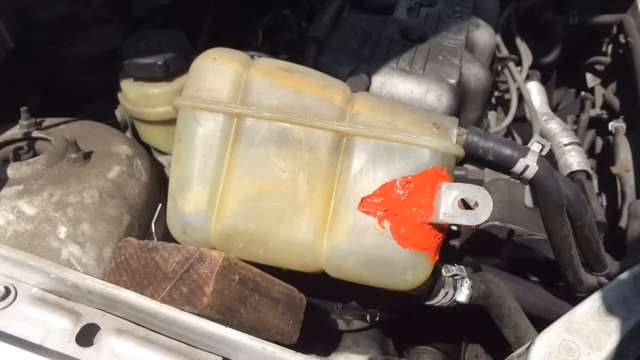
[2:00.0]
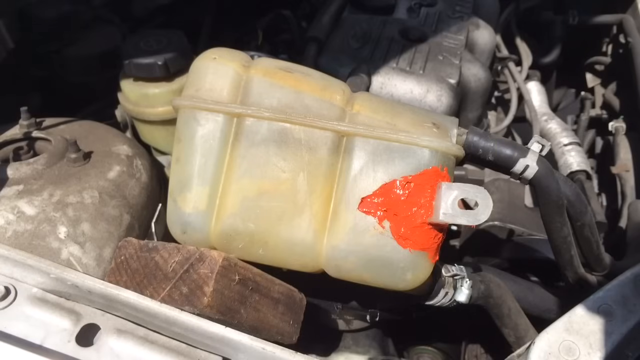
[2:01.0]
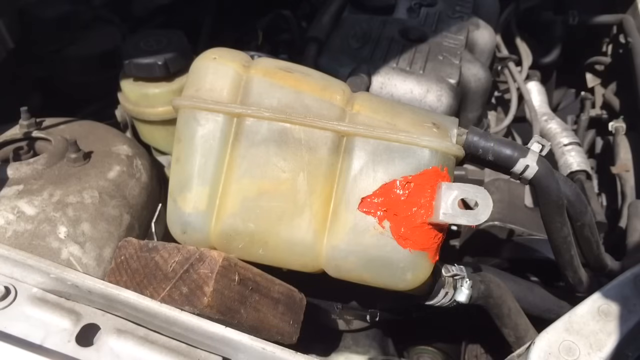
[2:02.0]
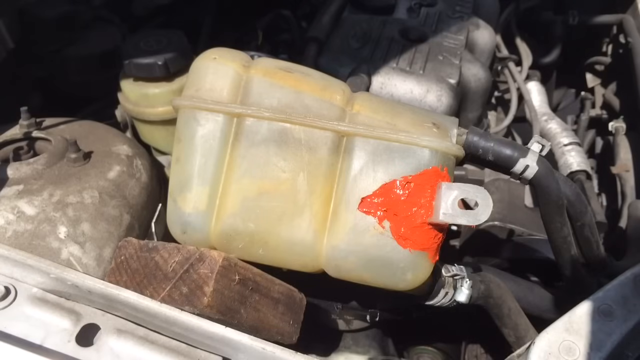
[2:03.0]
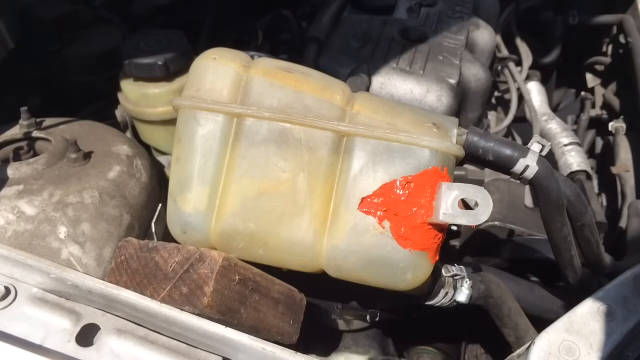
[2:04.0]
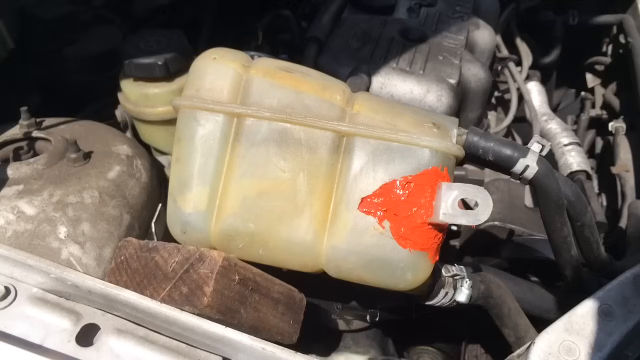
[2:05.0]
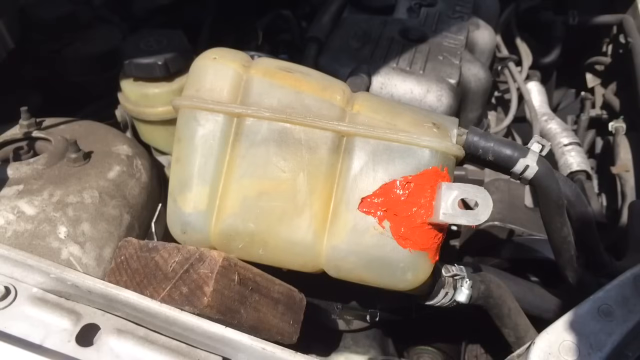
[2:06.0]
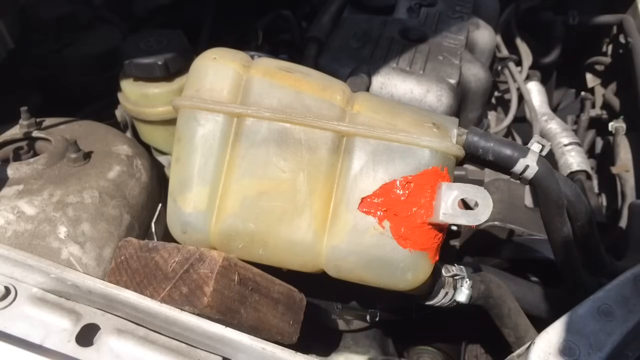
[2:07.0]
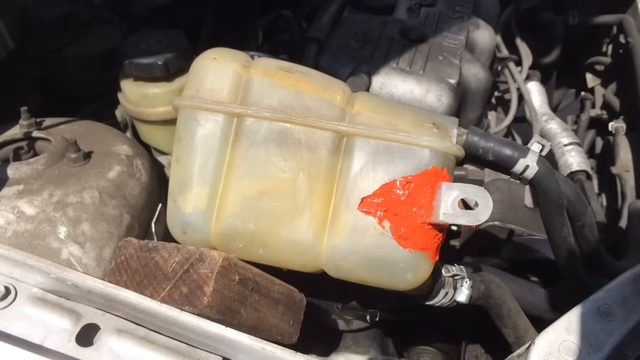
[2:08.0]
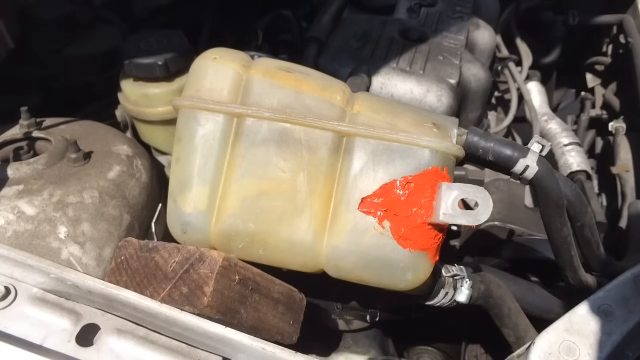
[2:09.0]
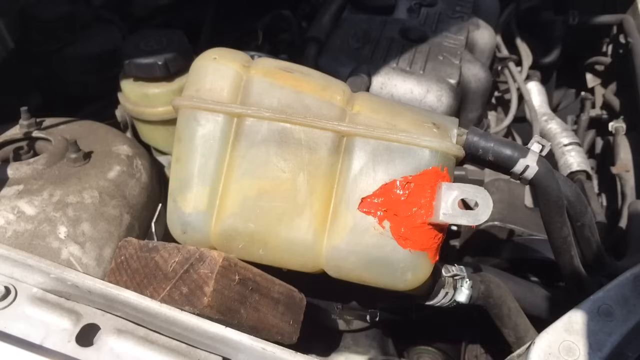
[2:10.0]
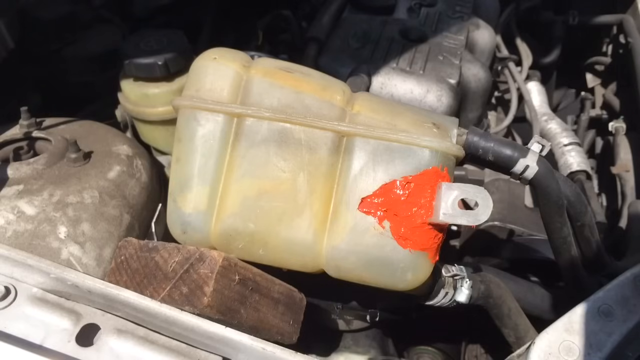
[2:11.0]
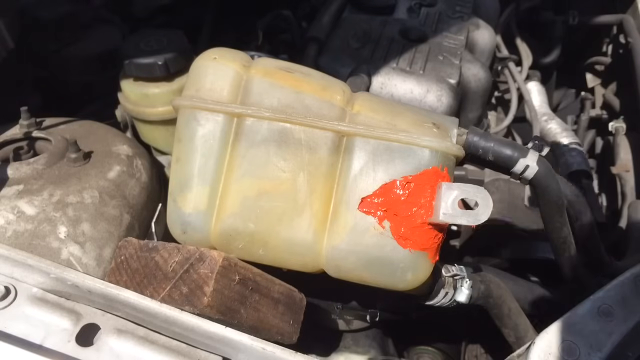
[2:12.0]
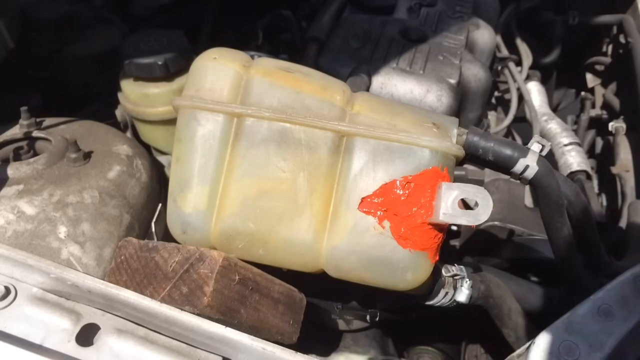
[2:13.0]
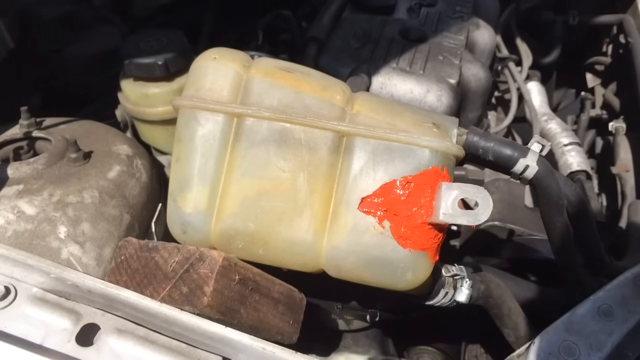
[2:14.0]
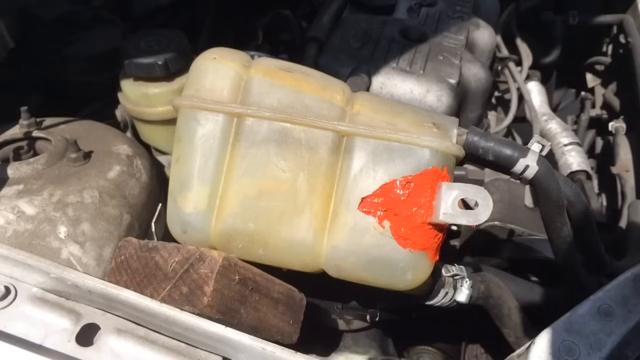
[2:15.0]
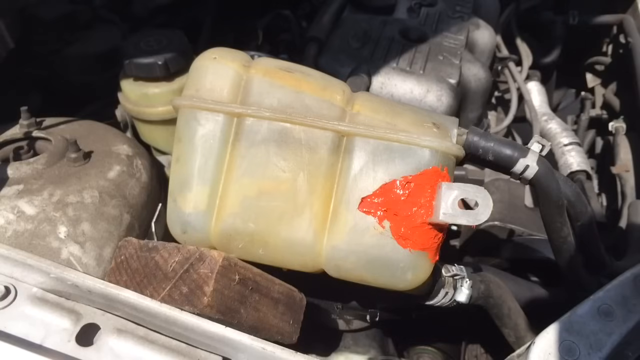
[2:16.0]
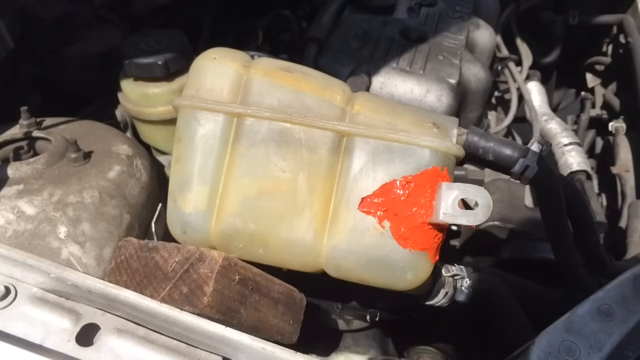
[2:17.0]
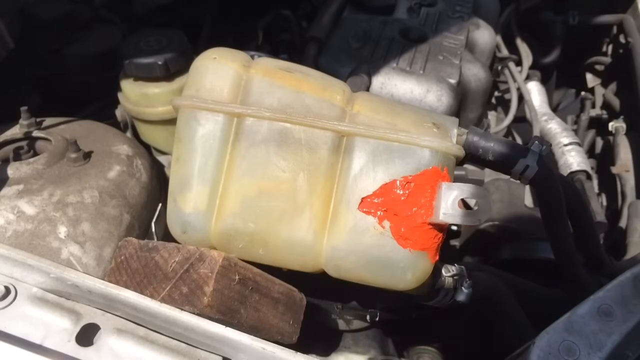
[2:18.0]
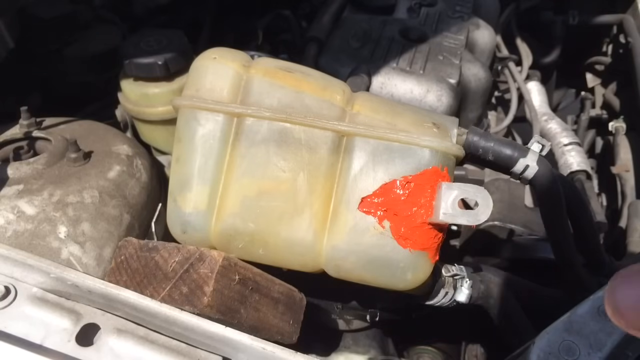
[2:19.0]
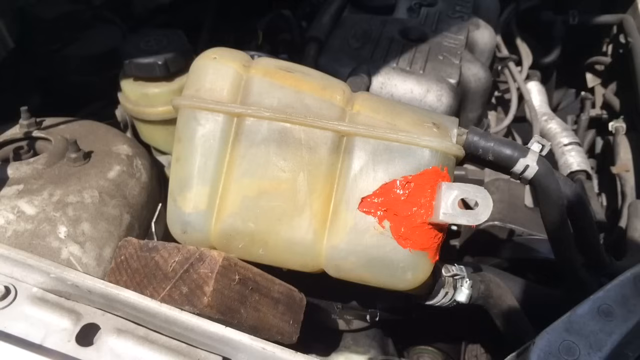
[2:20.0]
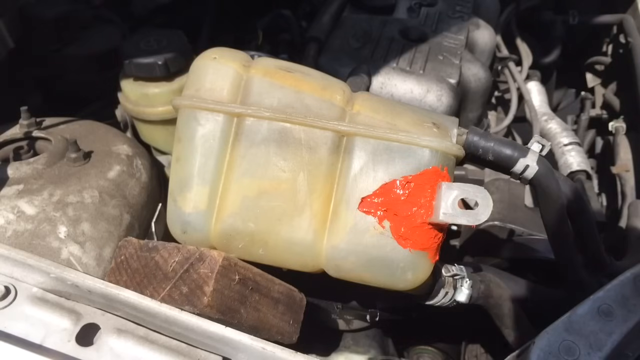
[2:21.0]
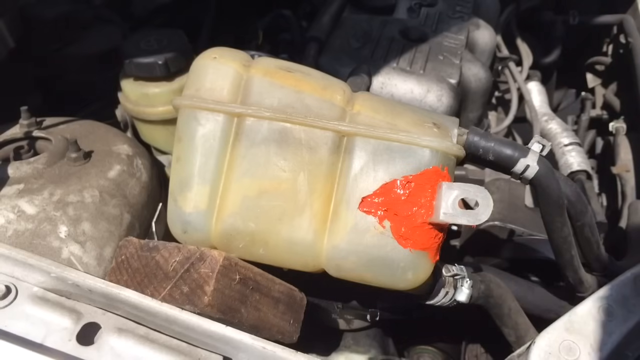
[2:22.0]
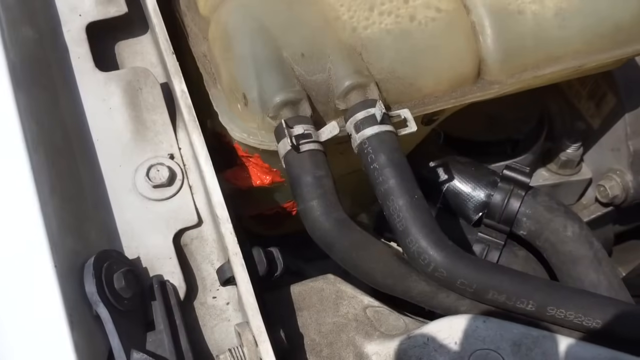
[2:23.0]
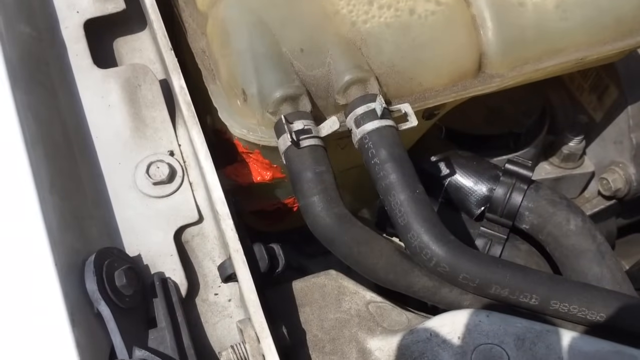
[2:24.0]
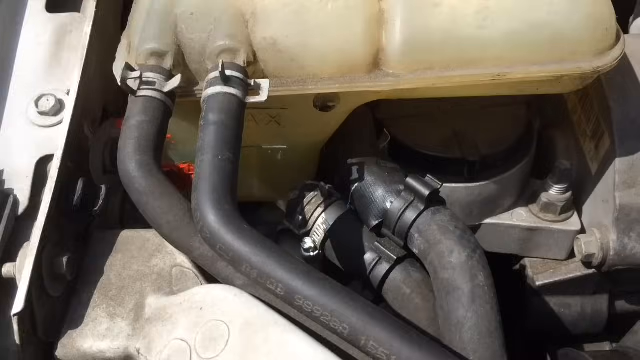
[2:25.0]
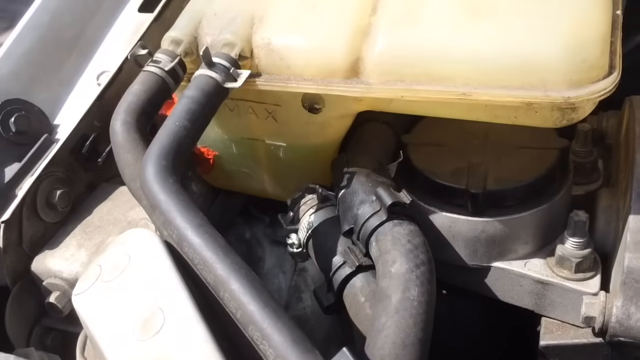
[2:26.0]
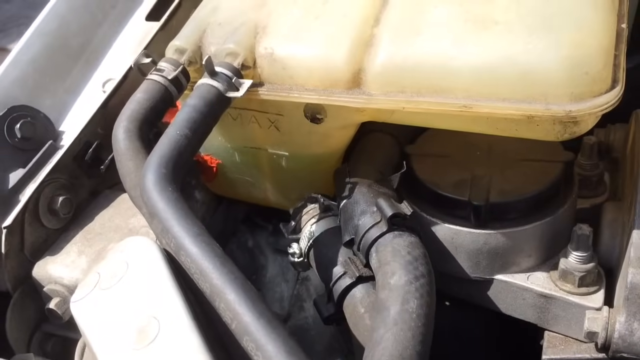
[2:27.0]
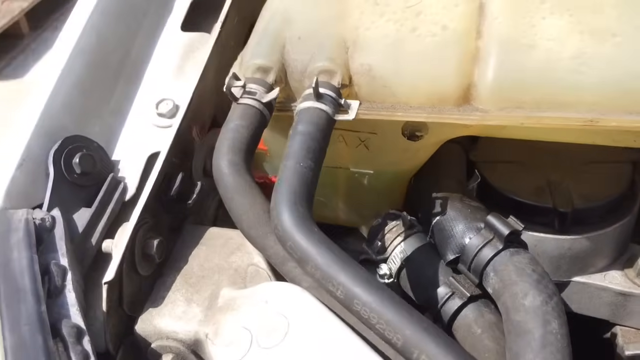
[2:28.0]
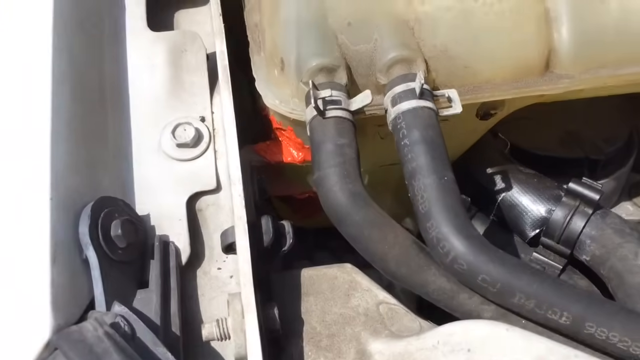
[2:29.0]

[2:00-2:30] The engine compartment of an automobile is shown, with the coolant reservoir, or expansion tank, in focus. It is an off-white beige plastic container with a tag sticking out on the right end. The bottom right portion of the tank is covered in an orangish-red bonding substance spread into a smooth, flat layer, covering a majority of the bottom right side of the tank. A hand reaches into view, showing a few fingers of the right hand, with Caucasian or light white skin. It motions toward the tank a few times before going back out of focus. The shadow moves around, and the hand reaches in and points at the bottom right part of the tank before a transition. The engine component is then seen from a different angle: it has been placed back into the engine compartment, and the orange substance is now on the bottom side. Two large rubber hoses are clamped into the coolant reservoir tank, and additional screws and clamps have been put in.